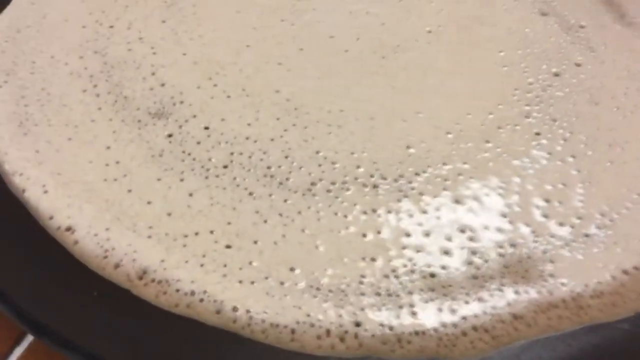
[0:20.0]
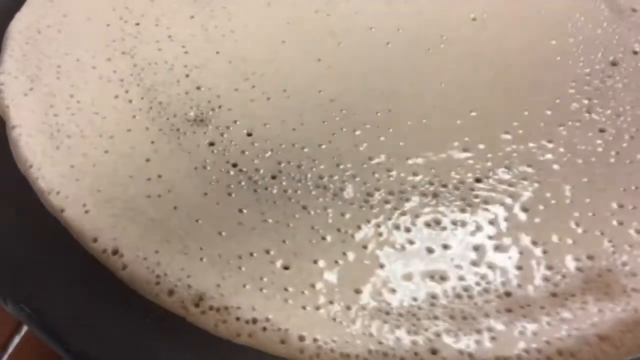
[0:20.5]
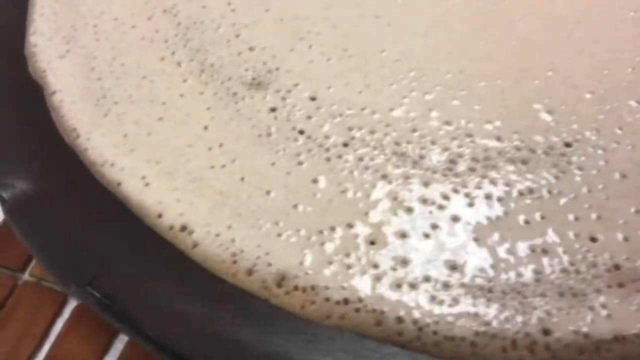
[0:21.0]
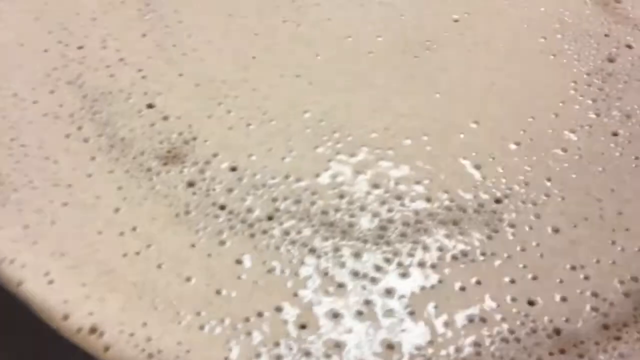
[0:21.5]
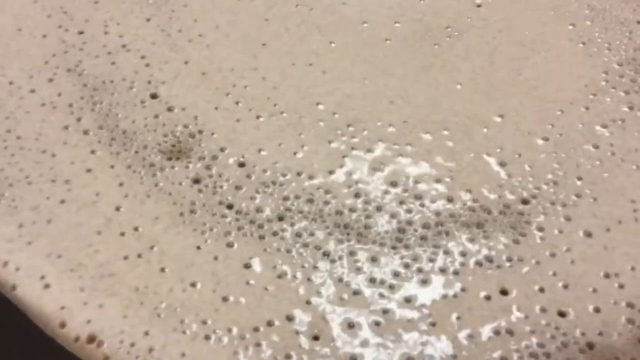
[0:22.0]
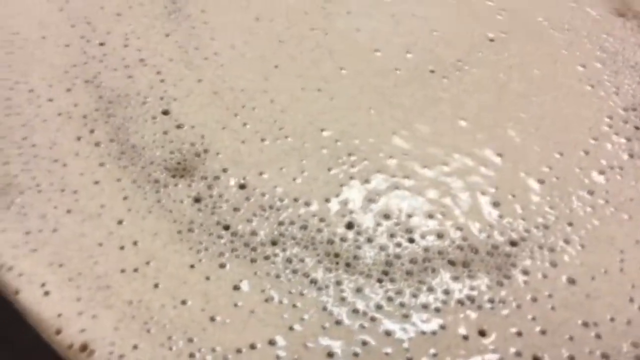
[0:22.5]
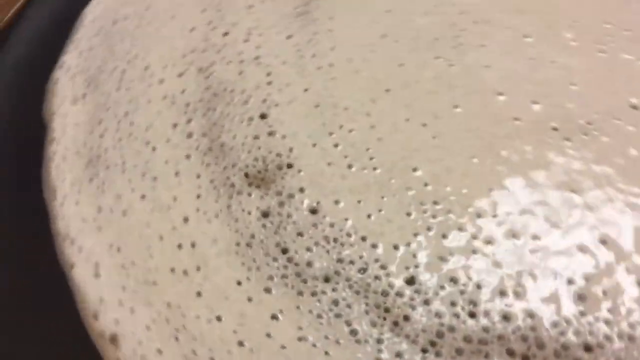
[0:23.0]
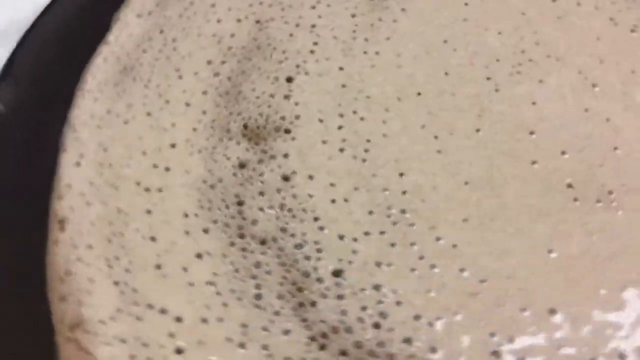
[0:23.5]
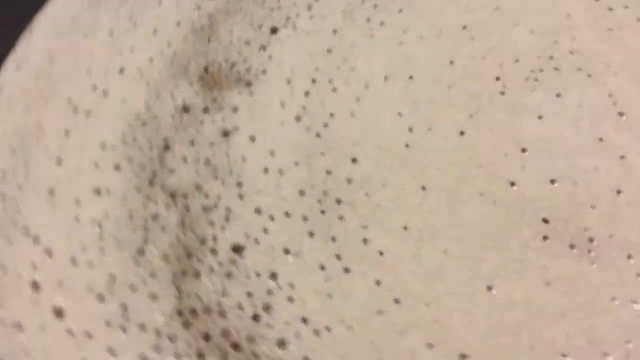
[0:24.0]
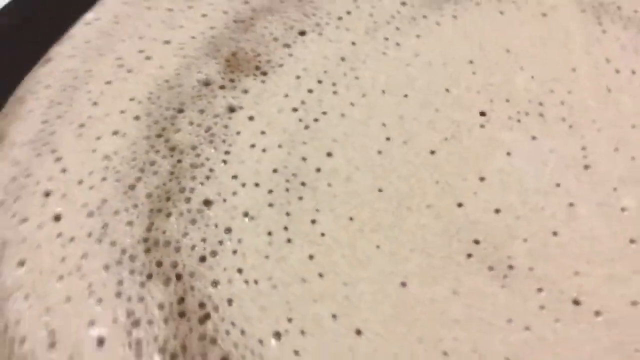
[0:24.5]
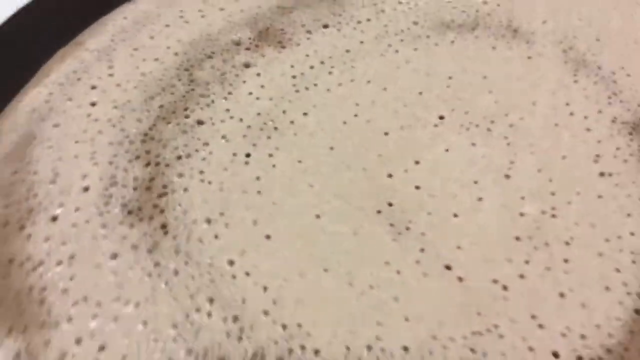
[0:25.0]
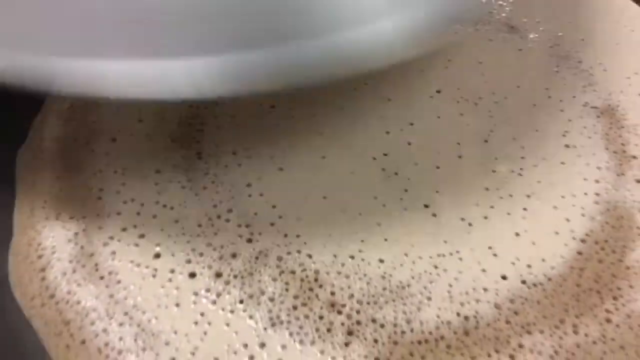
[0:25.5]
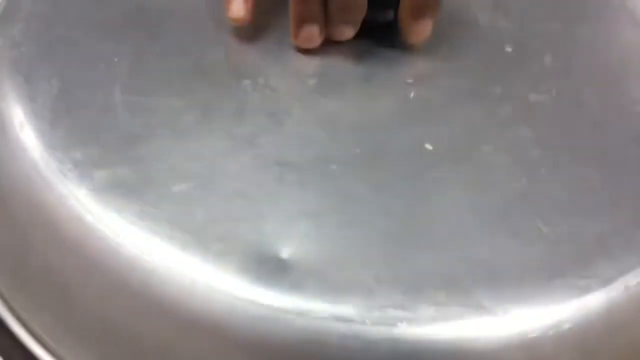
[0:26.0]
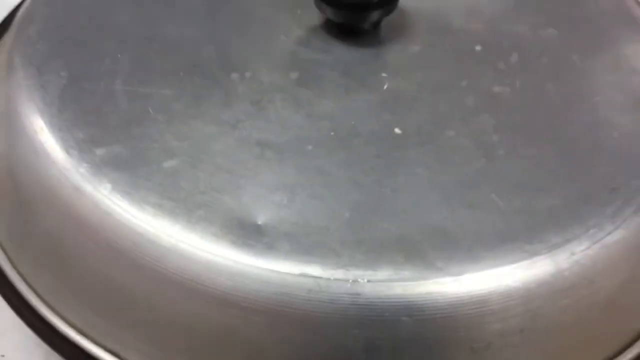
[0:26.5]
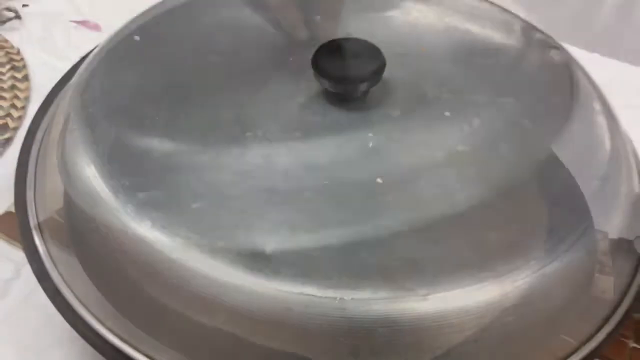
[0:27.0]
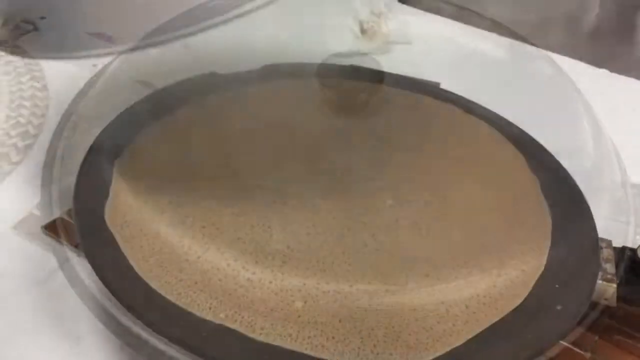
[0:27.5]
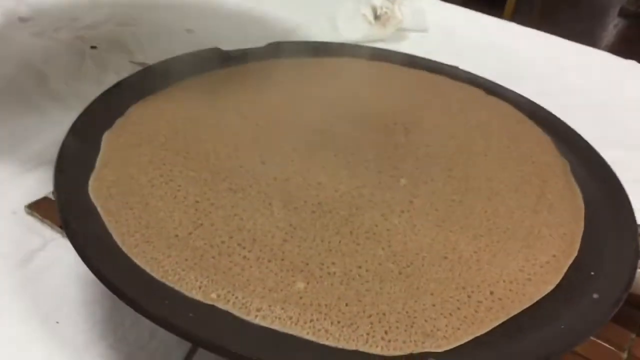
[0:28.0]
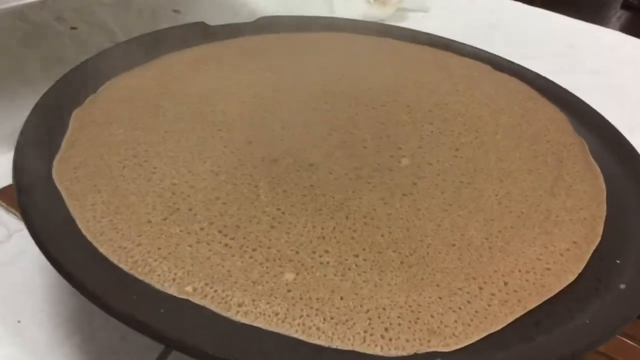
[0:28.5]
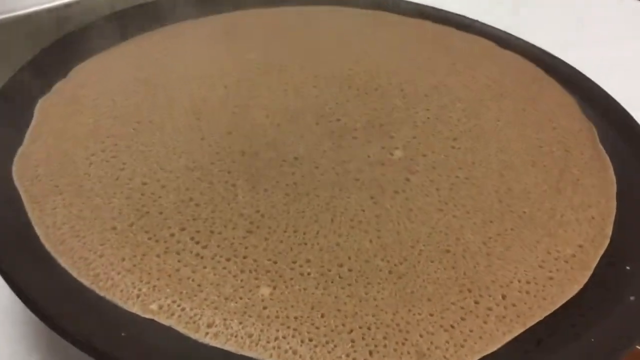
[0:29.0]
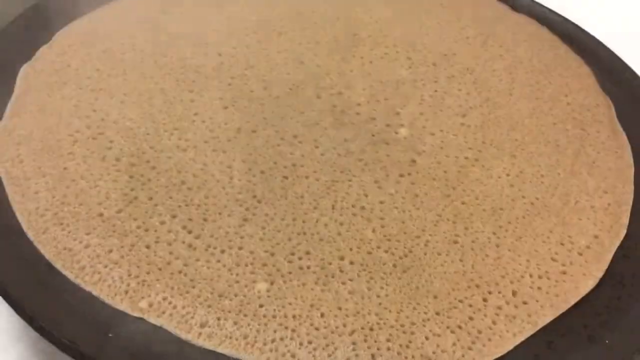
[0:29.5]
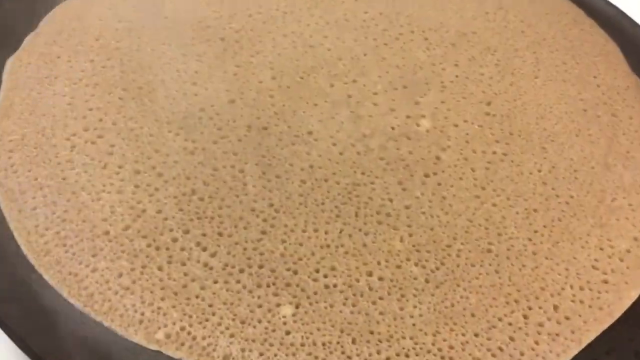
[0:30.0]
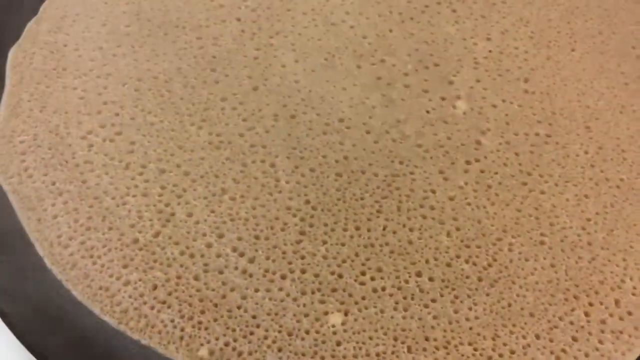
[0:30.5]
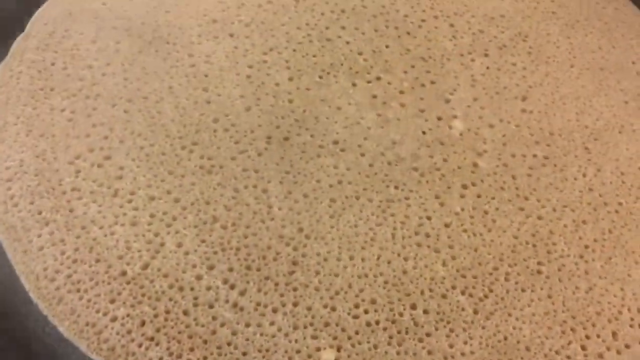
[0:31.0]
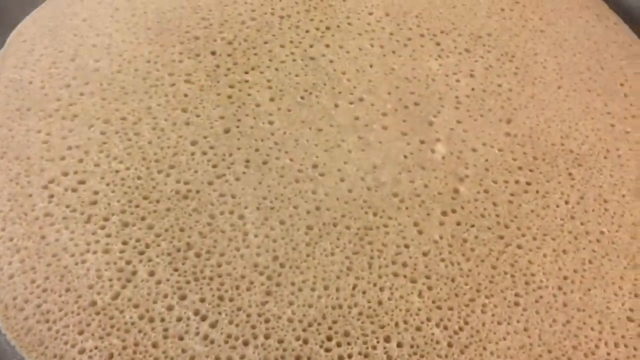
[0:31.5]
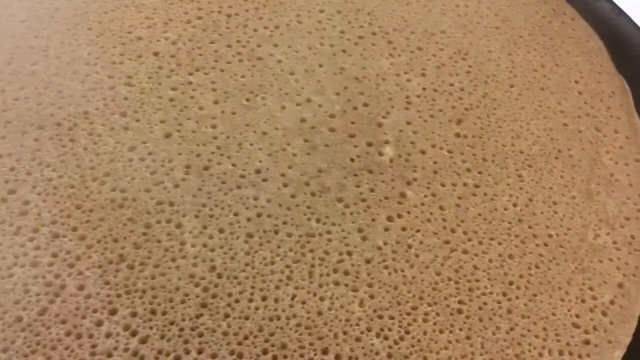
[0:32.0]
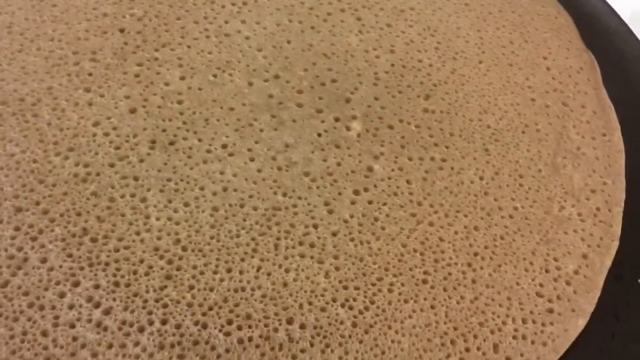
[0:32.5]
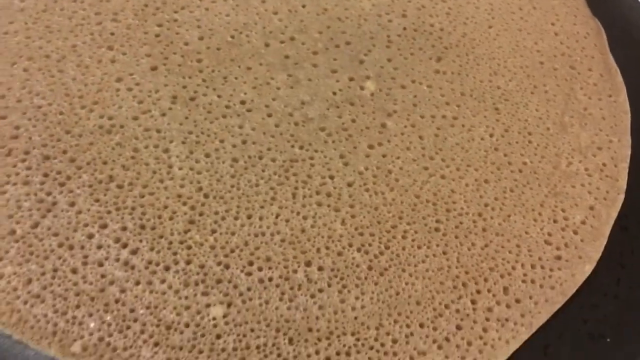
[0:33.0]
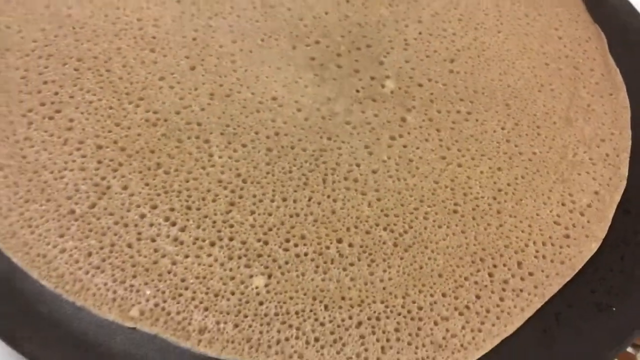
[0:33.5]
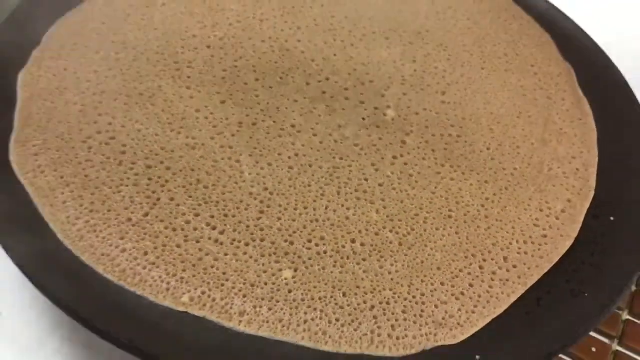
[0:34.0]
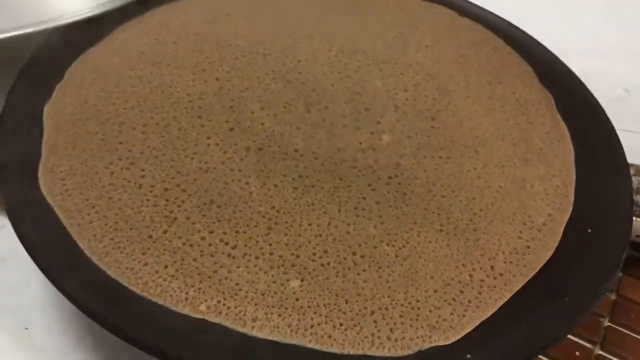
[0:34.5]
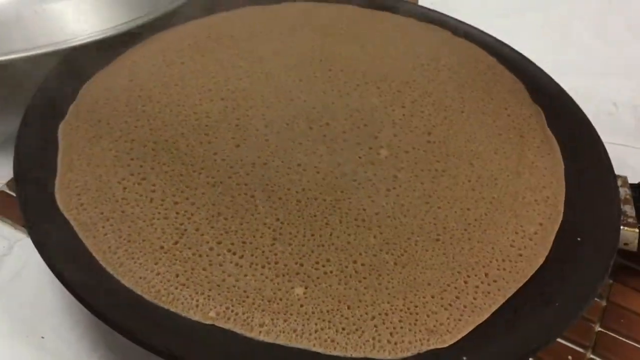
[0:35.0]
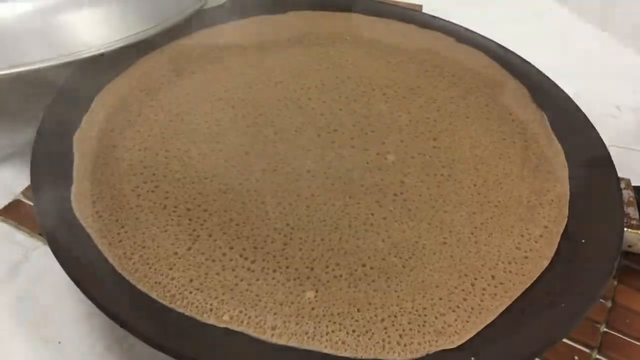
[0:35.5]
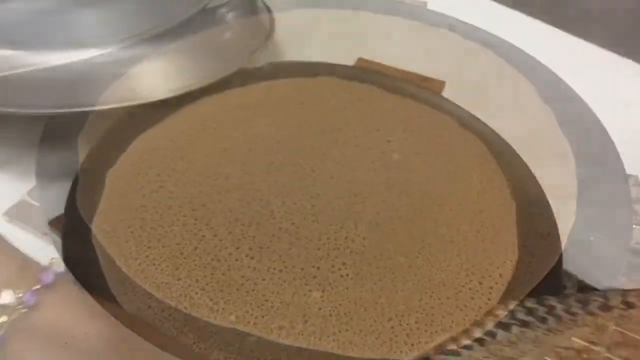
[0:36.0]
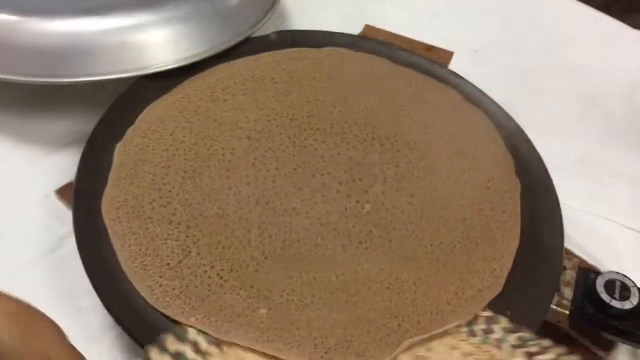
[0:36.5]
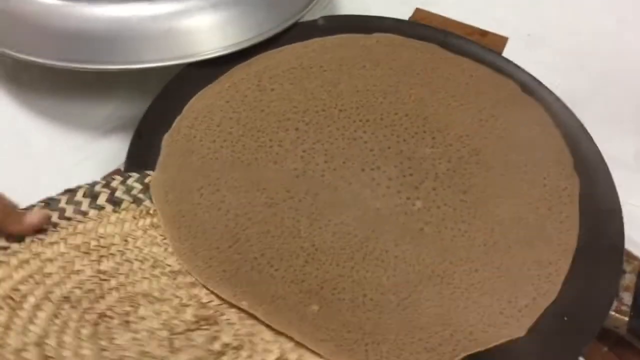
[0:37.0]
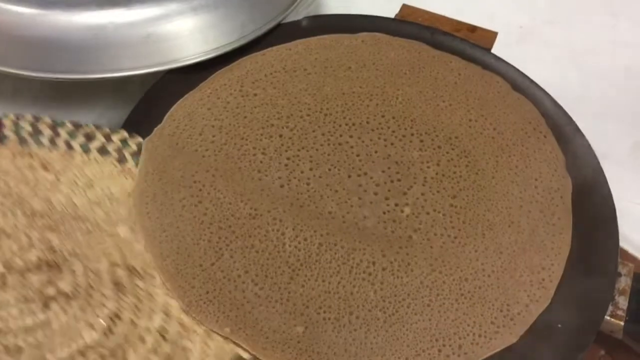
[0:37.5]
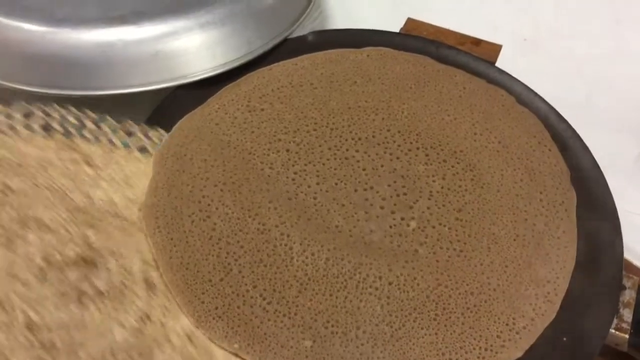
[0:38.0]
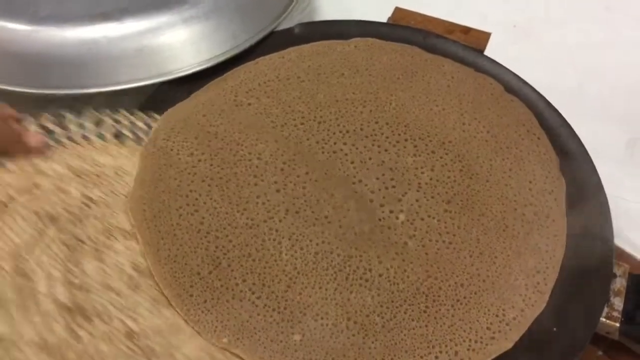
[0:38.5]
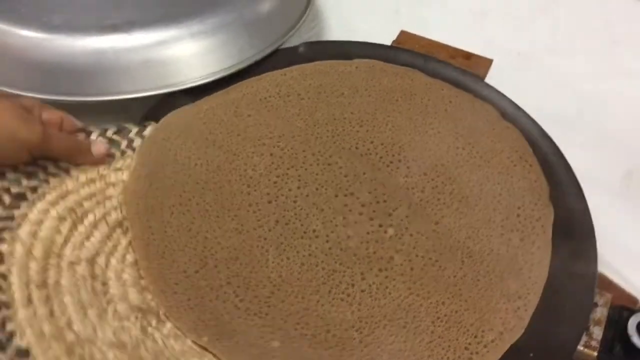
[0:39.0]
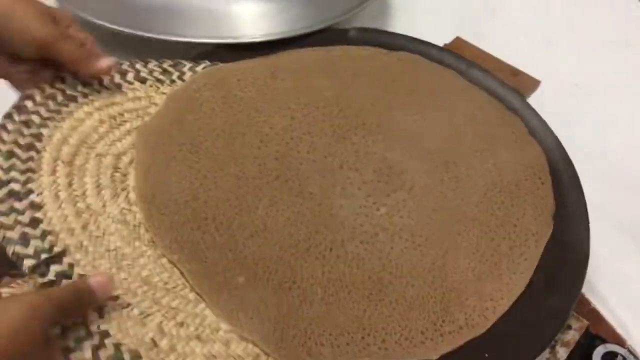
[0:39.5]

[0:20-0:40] A moving camera shot zooms in on the surface of the food, which has lots of holes, possibly 200 to 300 in total, with more holes from the middle to the outer edge. As the camera moves, a metal lid with a black handle is placed over the hot plate, covering it entirely. After a fade transition the lid is removed, and the pancake is now a lightish brown colour with holes in the middle, and steam coming up from it. The camera is angled down toward it and then zooms in on the bottom area of the food. After another transition, a kind of woven circular mat is used to scoop around the bottom edge of the pancake, and the item is pushed further using both hands.